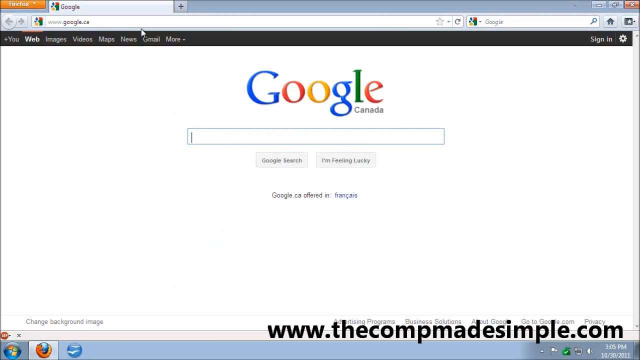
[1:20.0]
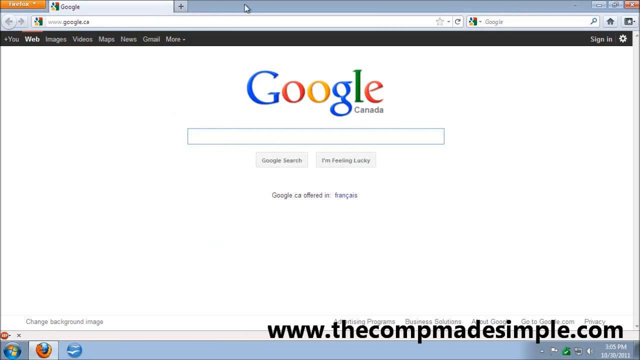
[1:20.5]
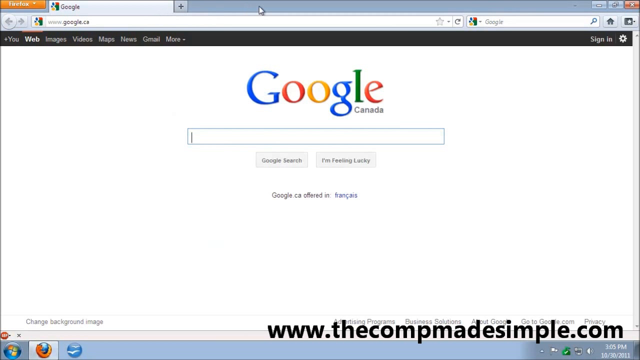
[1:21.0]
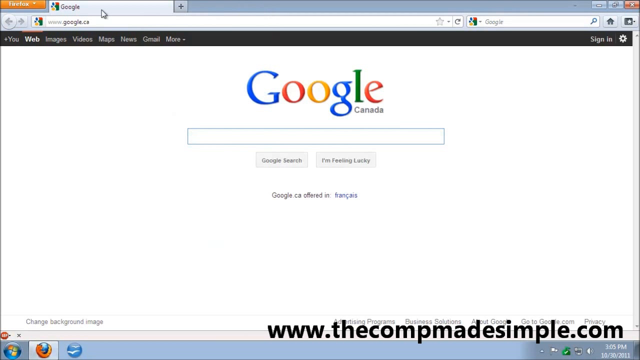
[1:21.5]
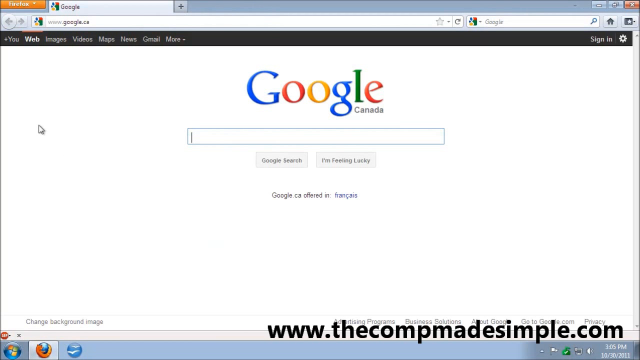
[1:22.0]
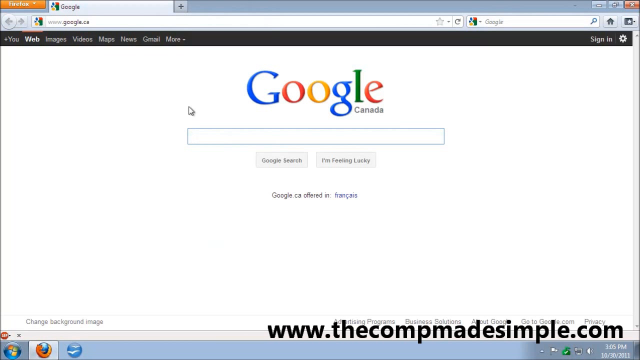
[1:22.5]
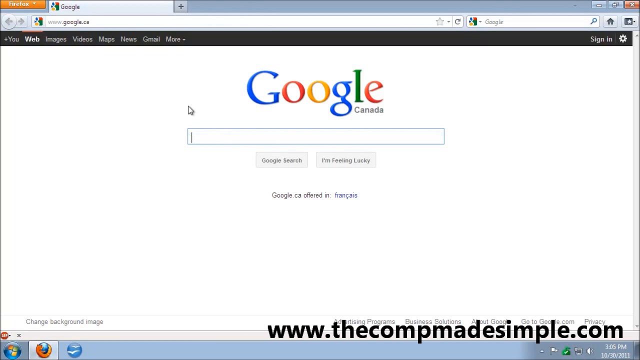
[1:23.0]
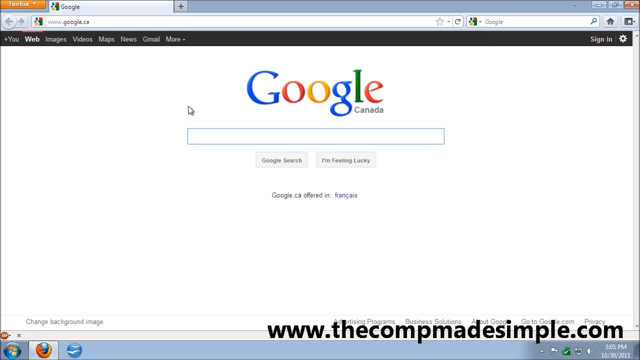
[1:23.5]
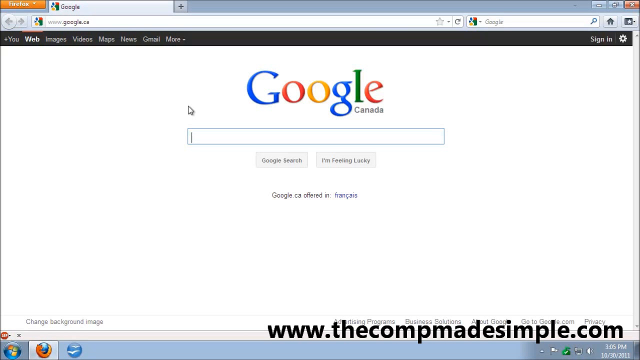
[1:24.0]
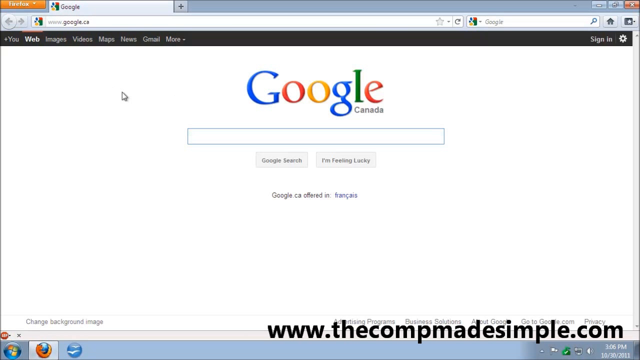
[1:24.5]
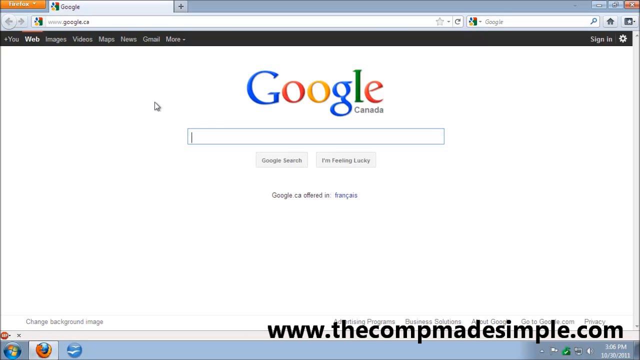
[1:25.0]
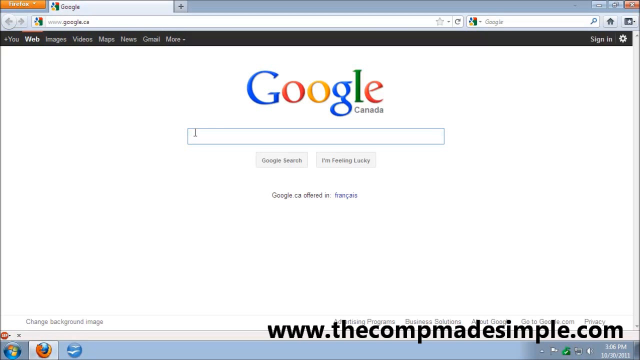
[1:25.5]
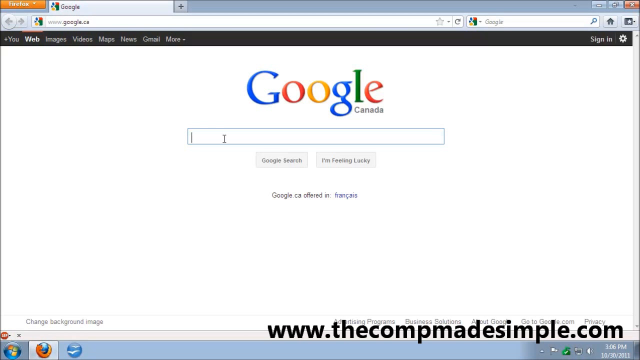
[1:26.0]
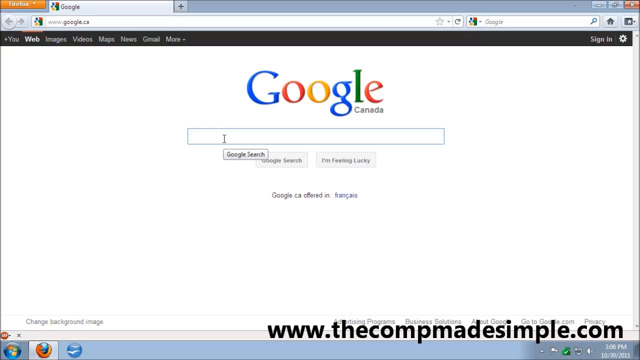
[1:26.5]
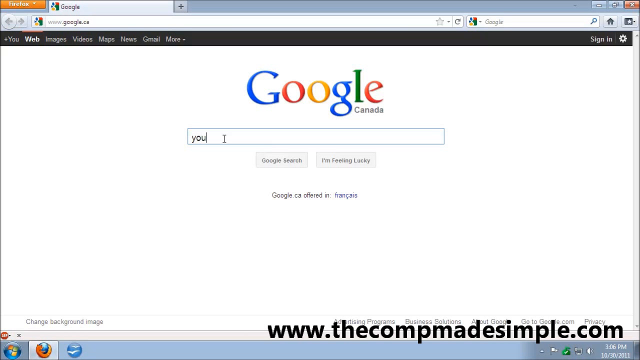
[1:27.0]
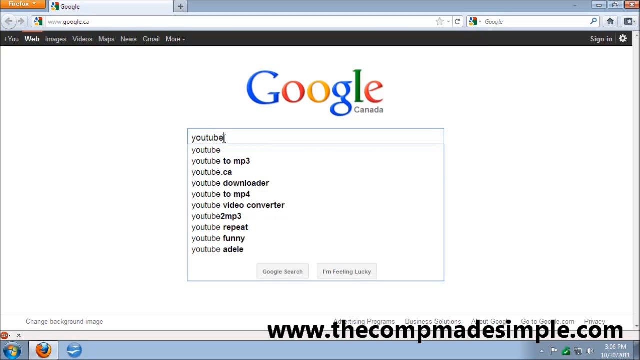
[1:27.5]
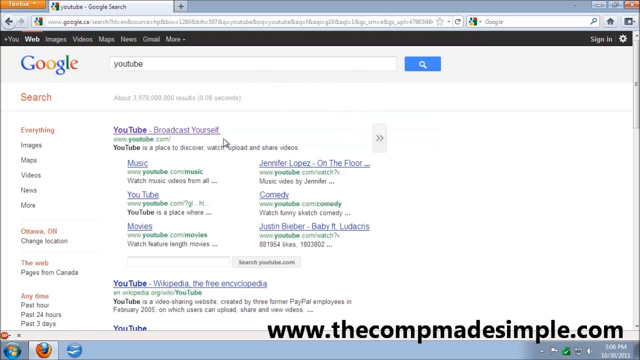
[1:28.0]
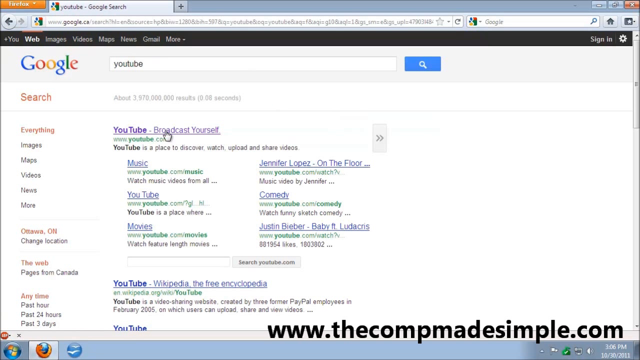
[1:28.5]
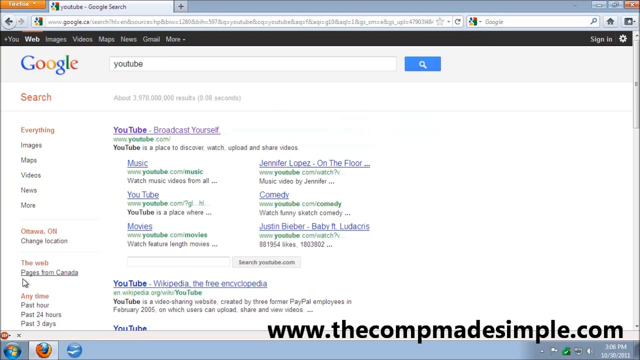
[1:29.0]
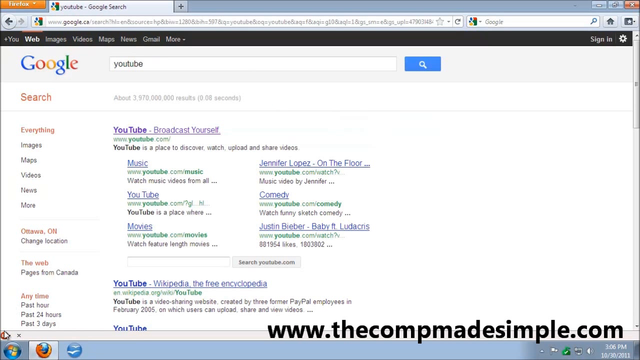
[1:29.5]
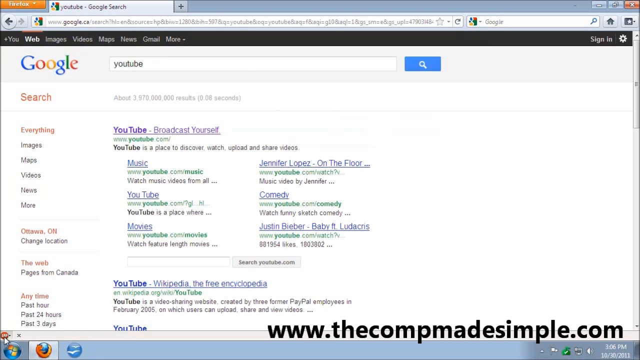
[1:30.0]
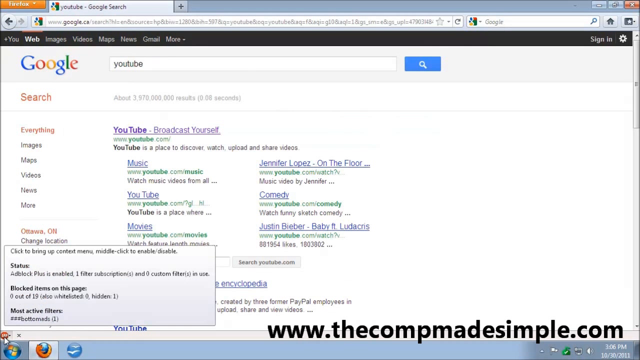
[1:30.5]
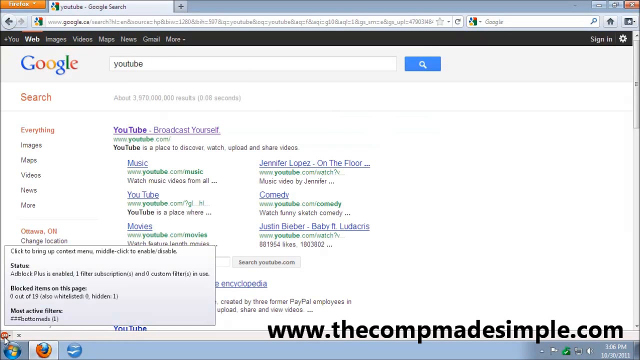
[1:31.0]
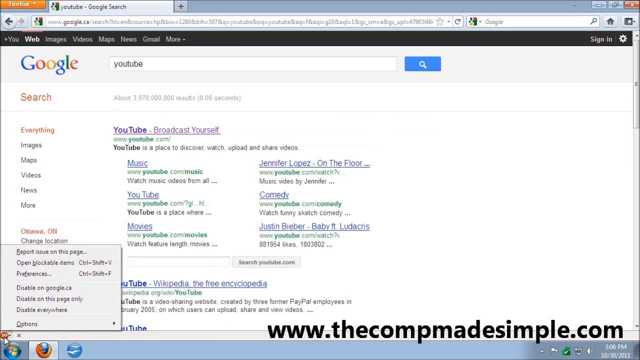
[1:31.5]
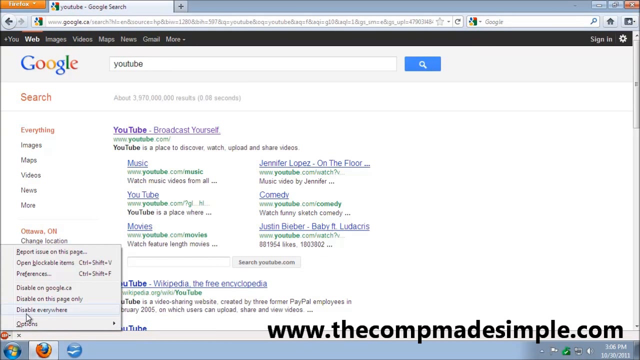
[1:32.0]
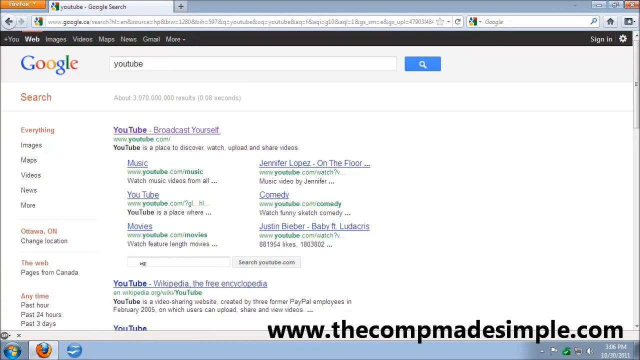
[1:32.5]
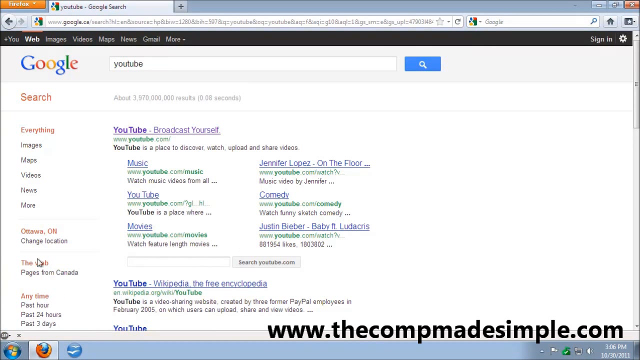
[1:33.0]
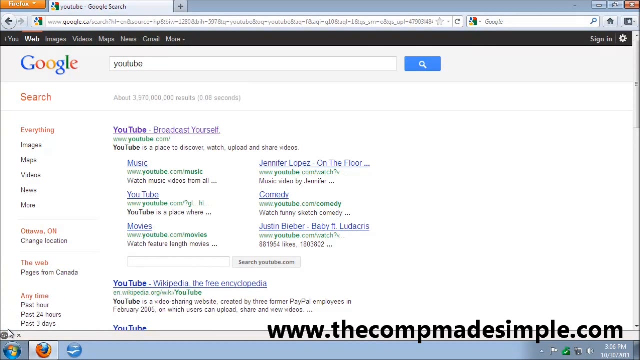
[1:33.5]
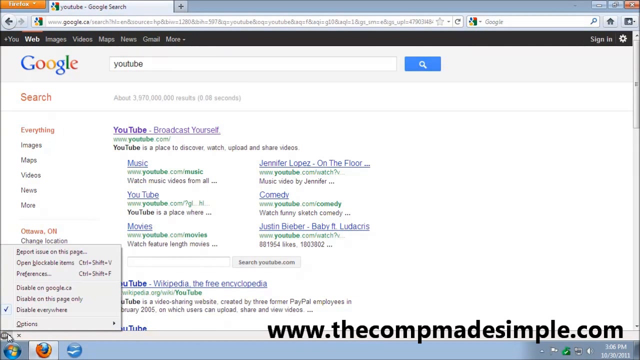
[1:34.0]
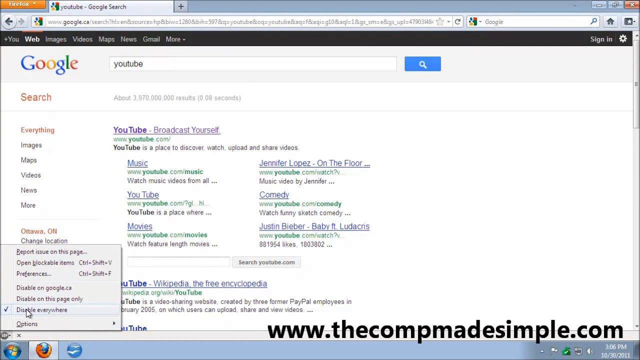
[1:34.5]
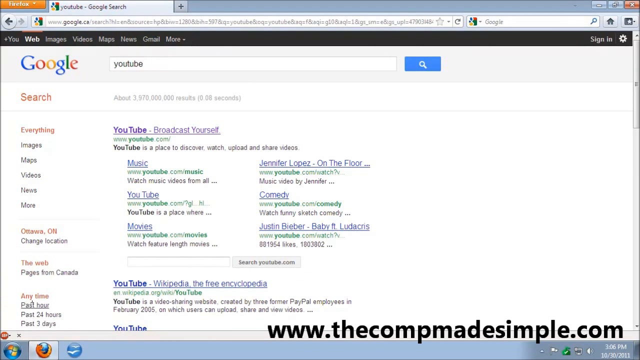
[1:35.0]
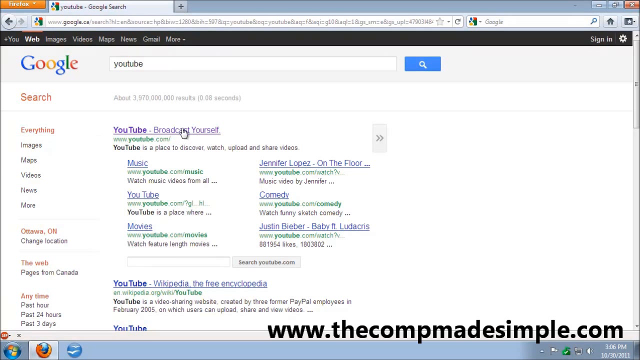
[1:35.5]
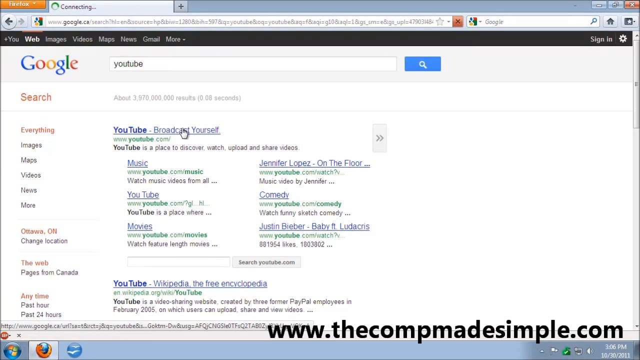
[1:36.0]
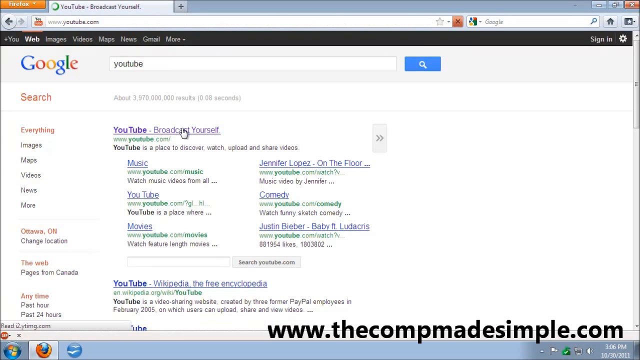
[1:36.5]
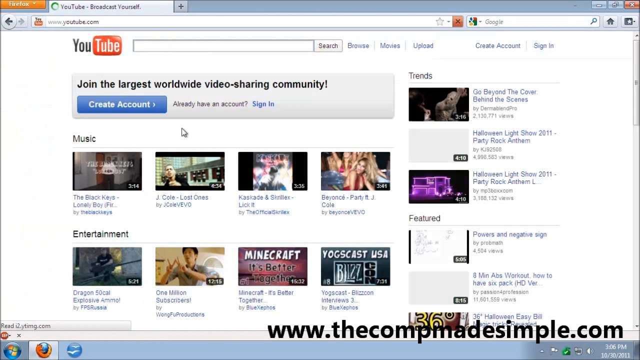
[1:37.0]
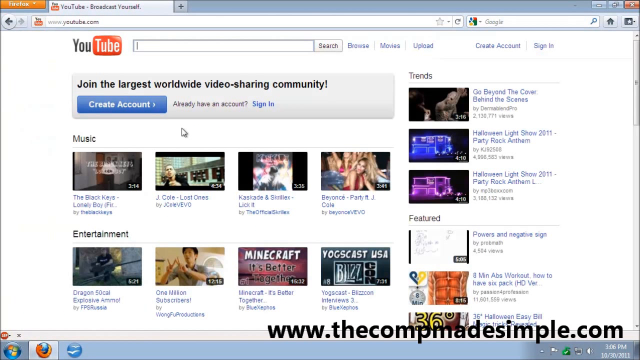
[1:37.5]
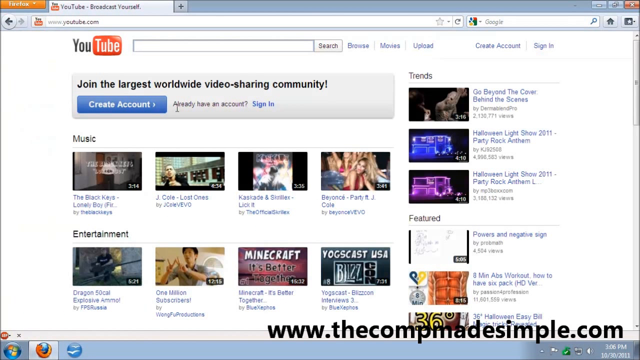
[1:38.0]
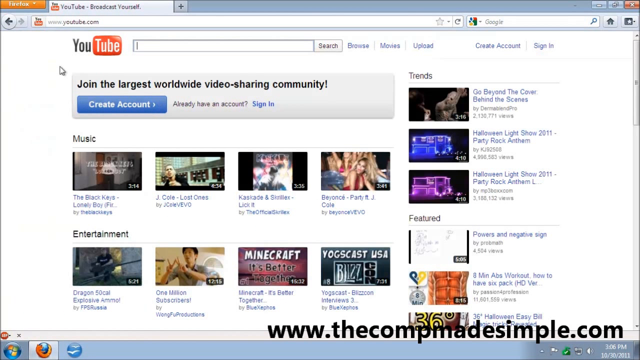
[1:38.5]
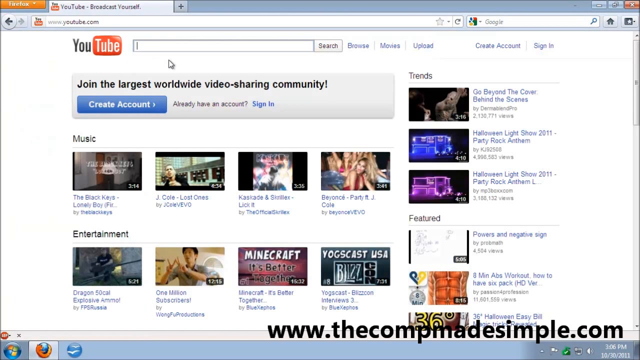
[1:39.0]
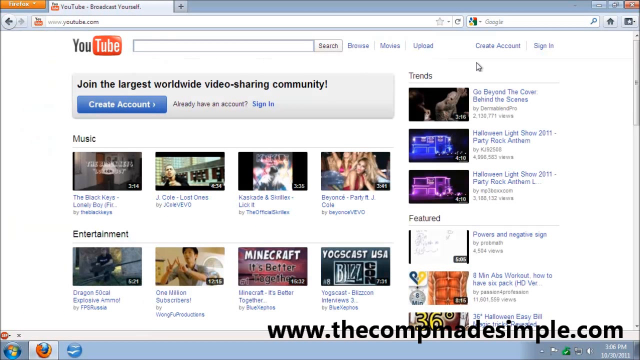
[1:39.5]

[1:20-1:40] The Google Canada search engine web page at google.ca is open. The user moves the mouse pointer to the search box, types YouTube and searches, which brings up the search results page. In the lower left corner of the browser, they use the mouse to turn AdBlock Plus on and off. They then click the top result for YouTube.com and reach the YouTube website, where AdBlock Plus is still enabled and videos are shown while the user is not signed in.